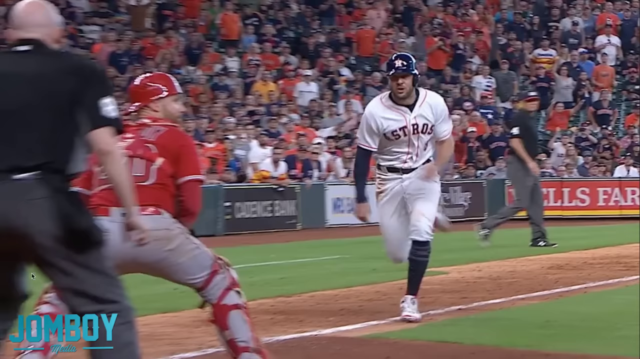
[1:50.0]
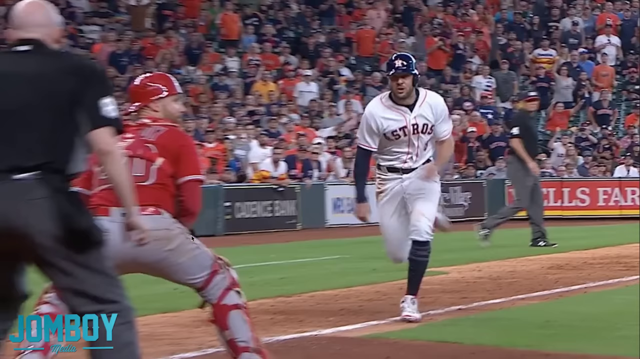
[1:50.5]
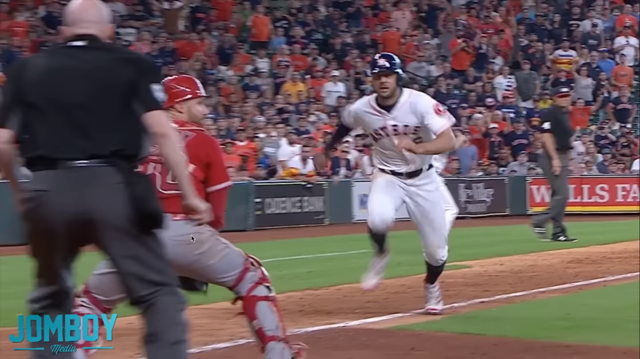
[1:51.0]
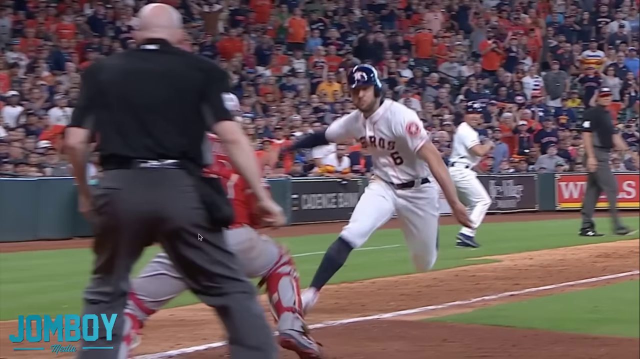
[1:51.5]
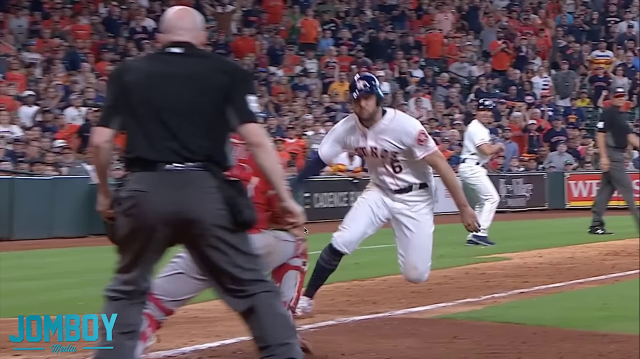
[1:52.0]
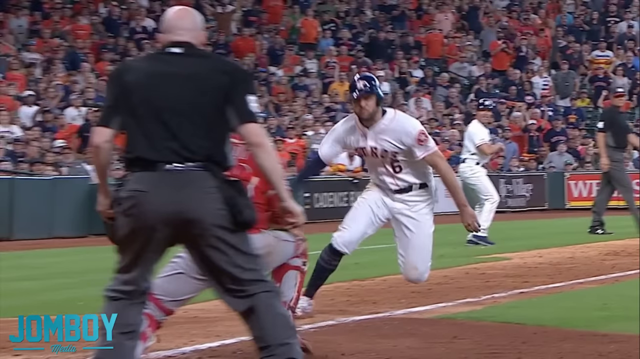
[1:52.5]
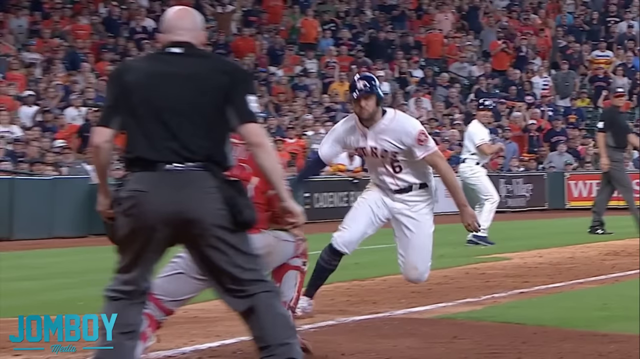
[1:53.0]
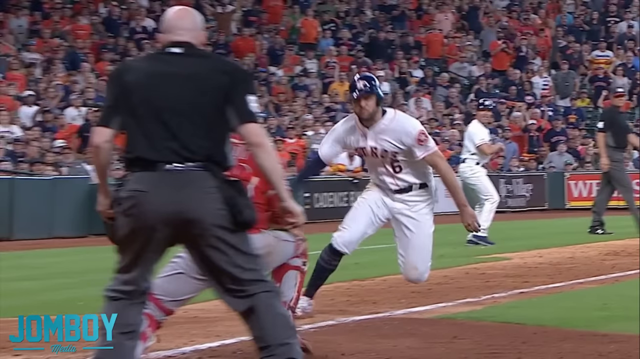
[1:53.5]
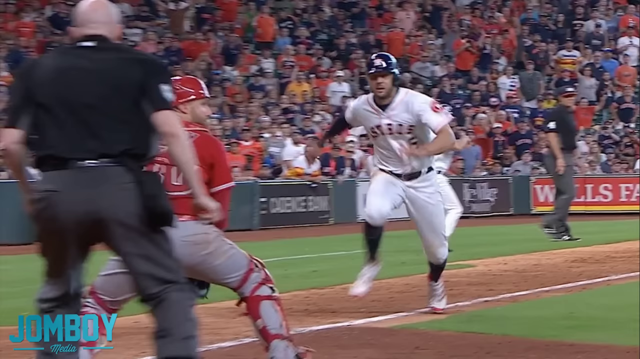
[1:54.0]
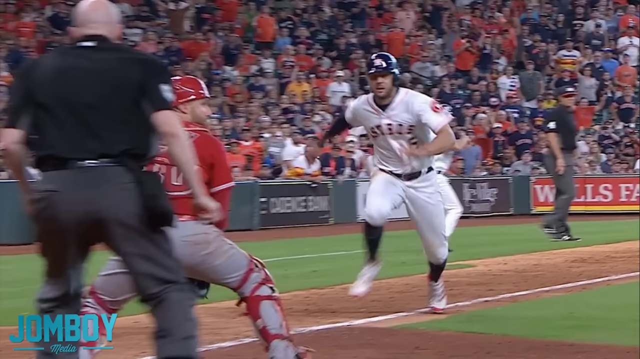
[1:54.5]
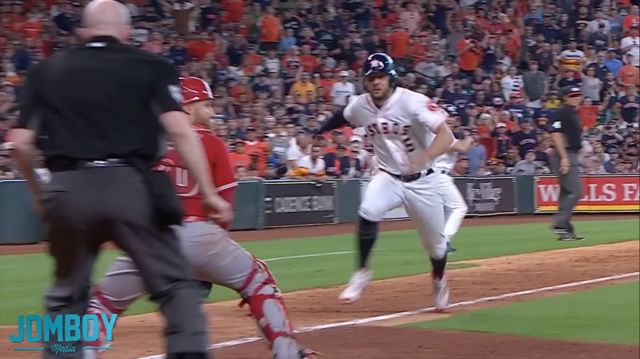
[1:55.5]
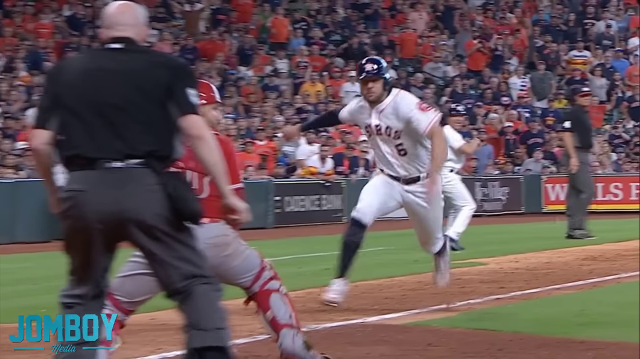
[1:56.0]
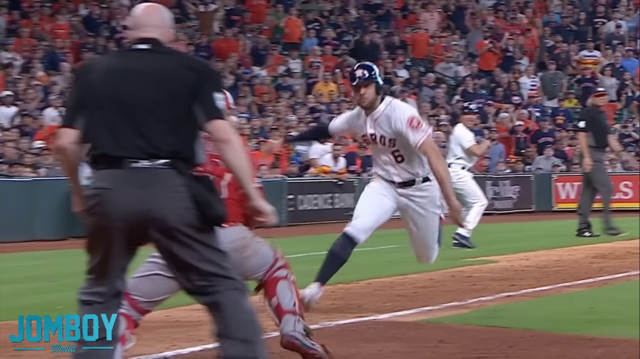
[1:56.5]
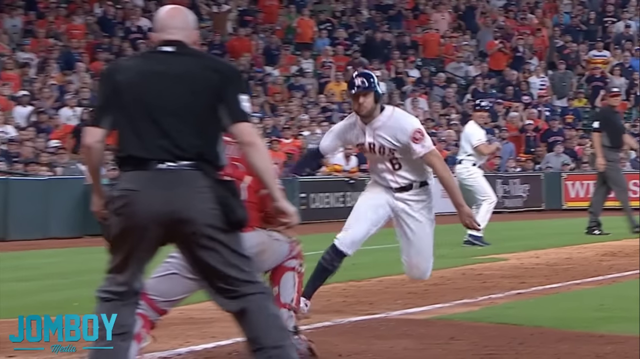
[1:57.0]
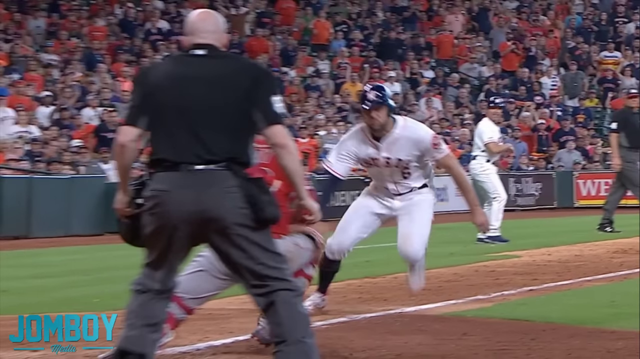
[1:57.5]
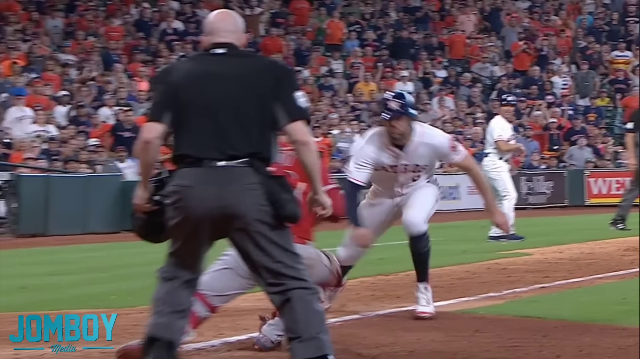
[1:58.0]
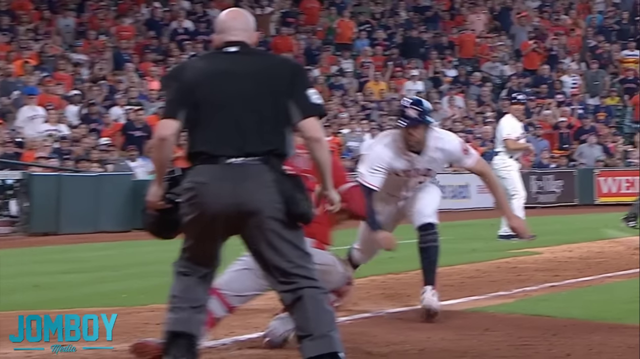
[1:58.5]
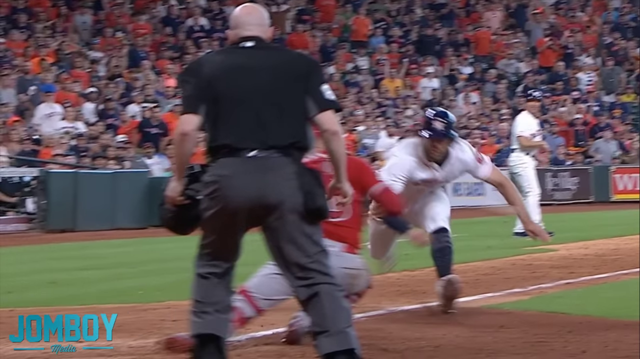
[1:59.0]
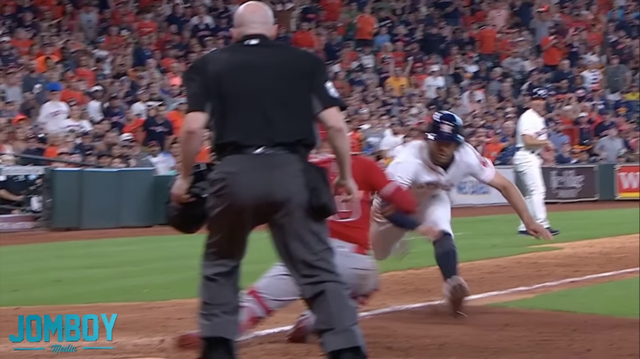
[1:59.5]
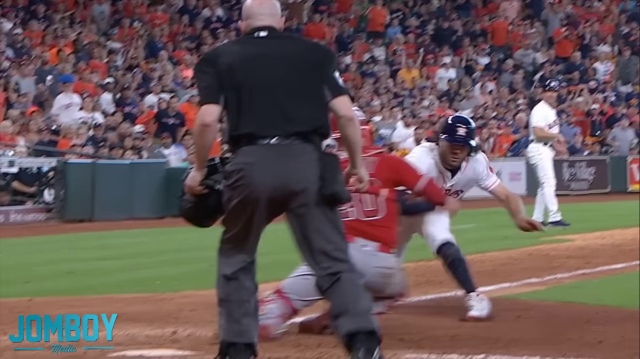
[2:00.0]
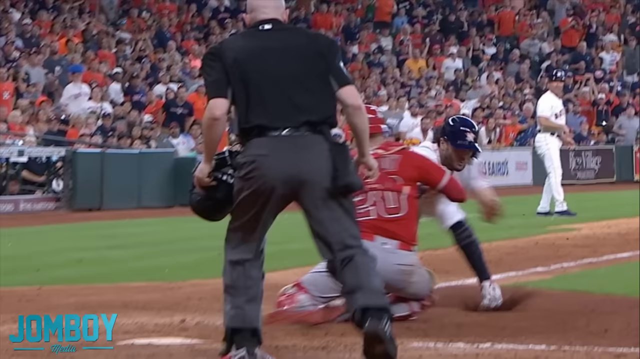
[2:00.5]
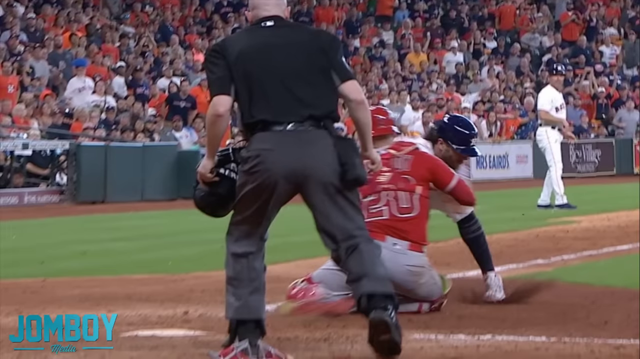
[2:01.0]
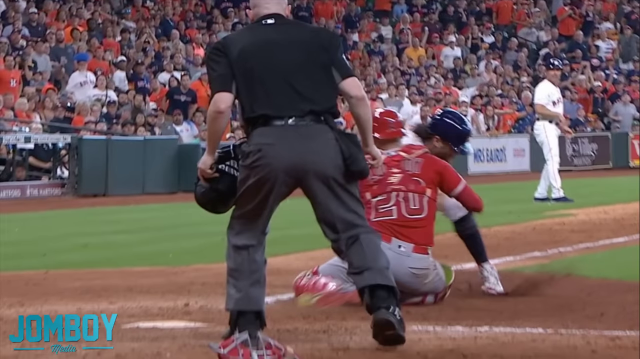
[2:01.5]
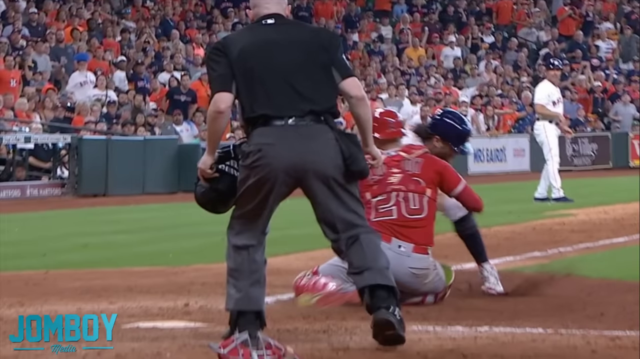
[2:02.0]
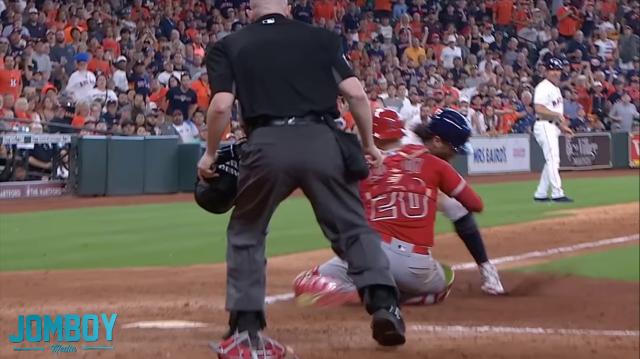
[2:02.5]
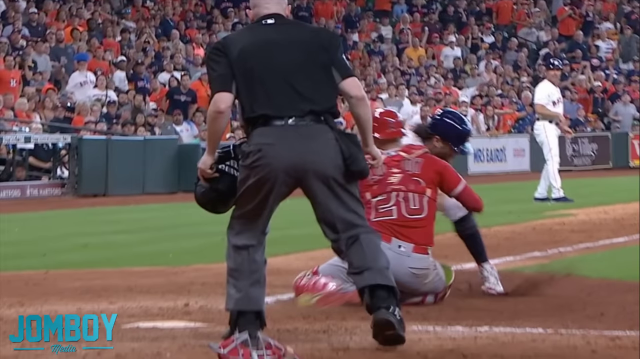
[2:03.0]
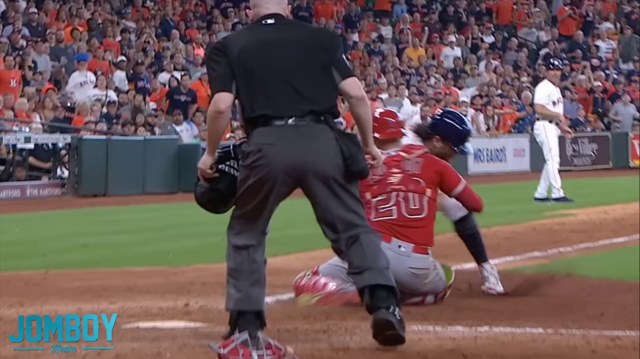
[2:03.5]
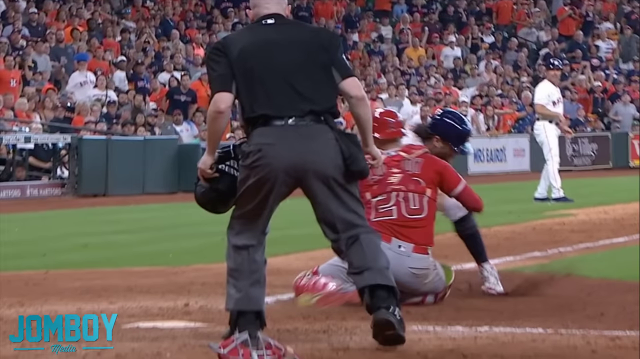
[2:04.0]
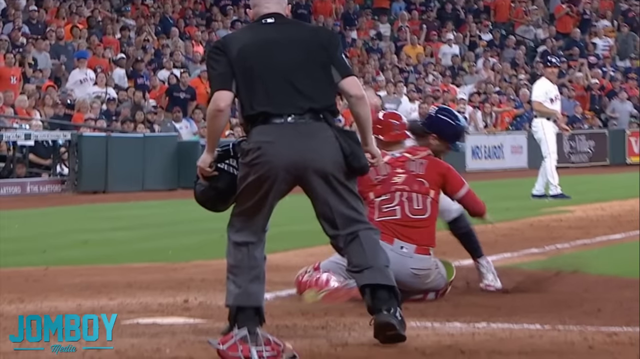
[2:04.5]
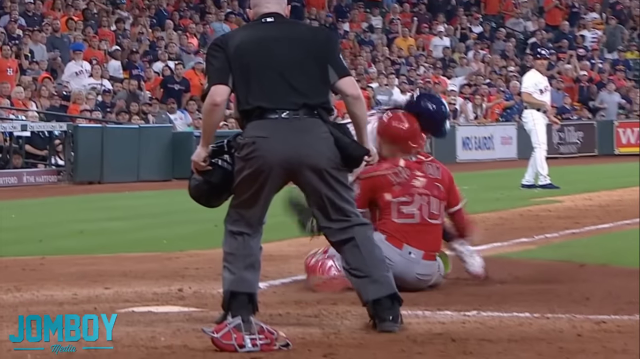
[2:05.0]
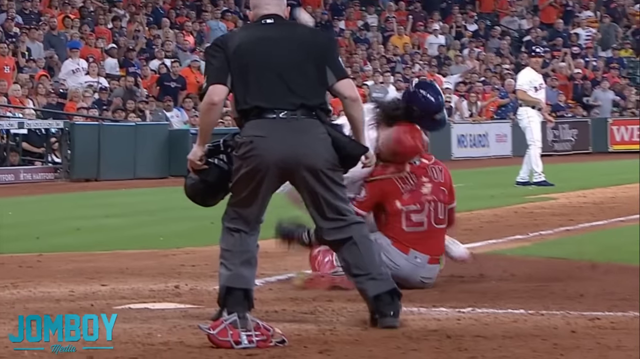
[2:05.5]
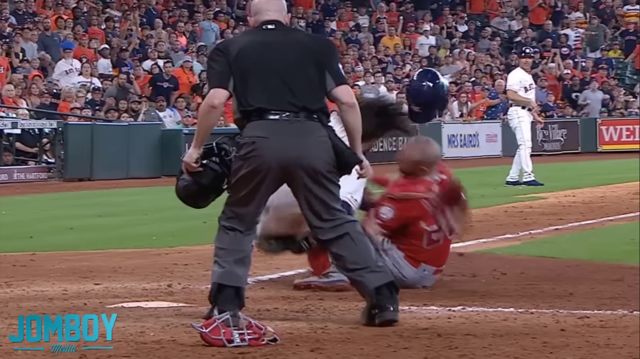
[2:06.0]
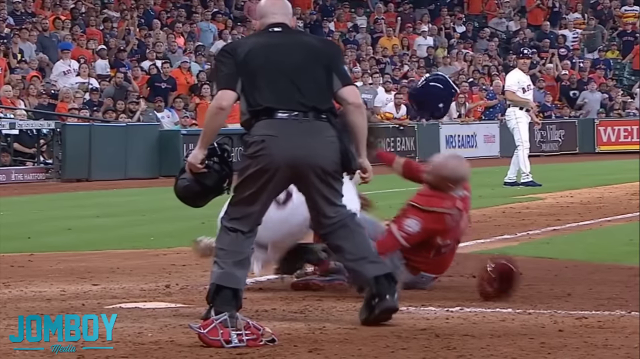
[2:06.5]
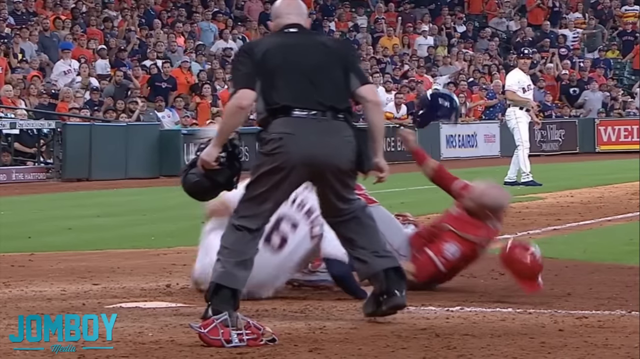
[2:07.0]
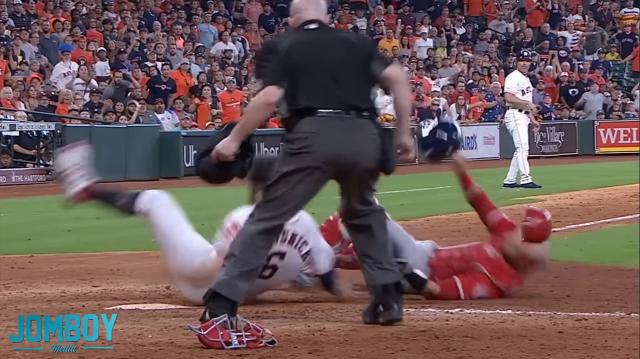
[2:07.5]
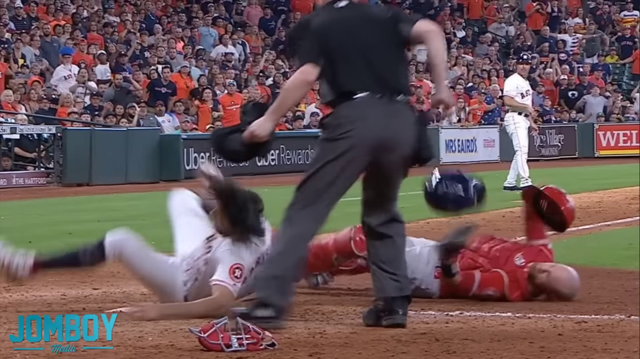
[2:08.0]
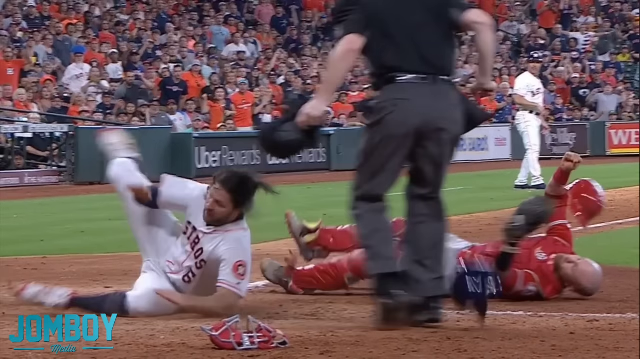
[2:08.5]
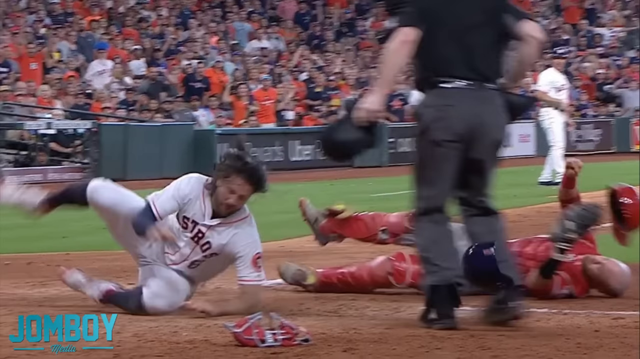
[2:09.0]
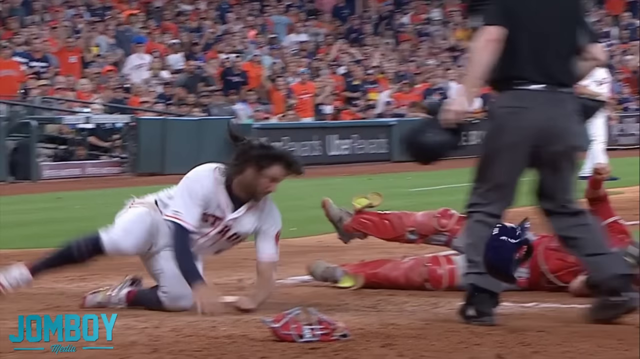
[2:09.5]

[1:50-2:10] The collision is shown again in slow motion, with the player running. It is a rough, hard fall. The player in the mostly red jersey has his helmet fly back; both helmets fall off, but his flies much farther. His neck appears to go stiff and freeze as soon as the hit happens, and he seems badly hurt even before fully reaching the ground. His nose looks greatly bruised and bleeding and possibly broken. One player runs one way, decides to go another way, and they crash. The head of the player in red bumps back, while the player in mostly white, the Astro, rolls over, and the other player flies.